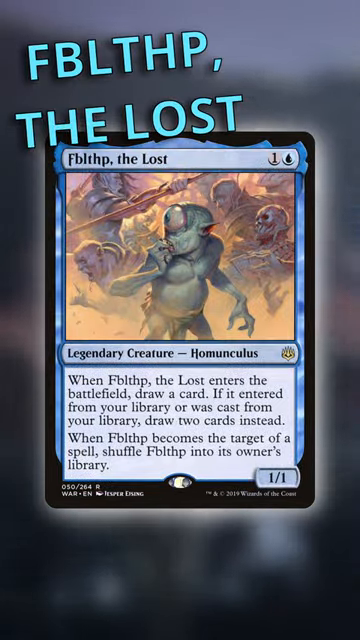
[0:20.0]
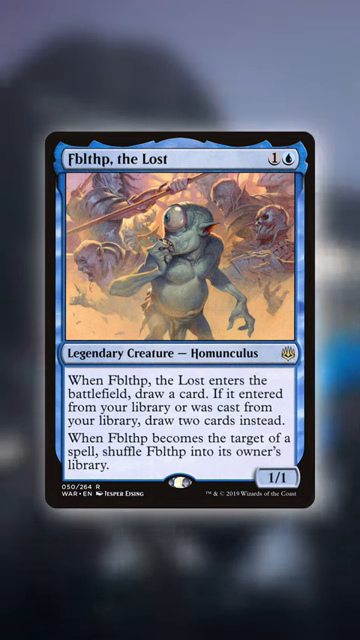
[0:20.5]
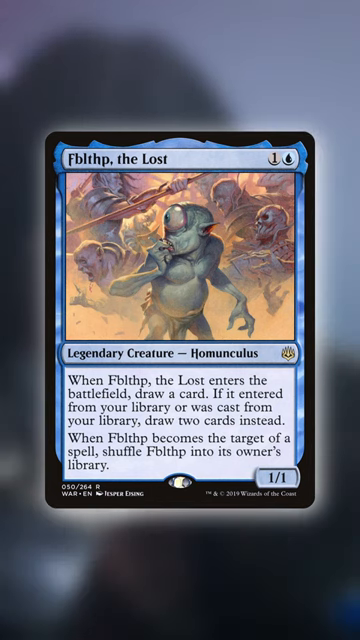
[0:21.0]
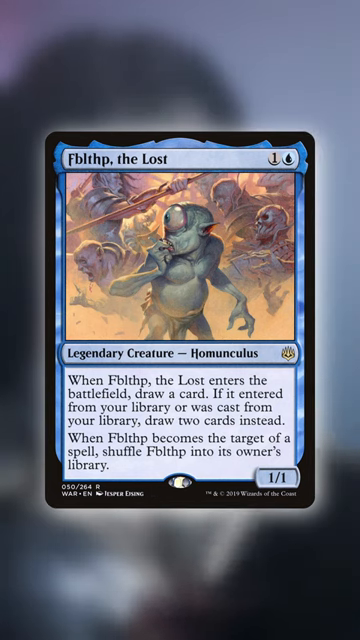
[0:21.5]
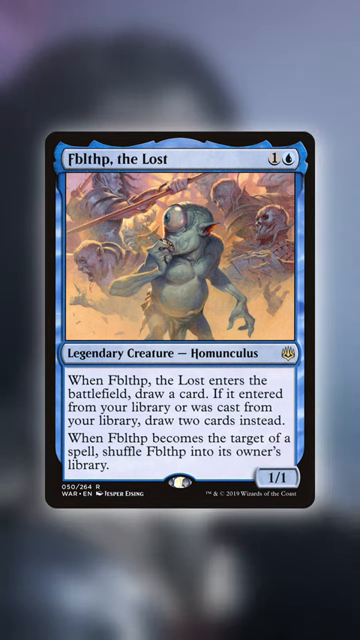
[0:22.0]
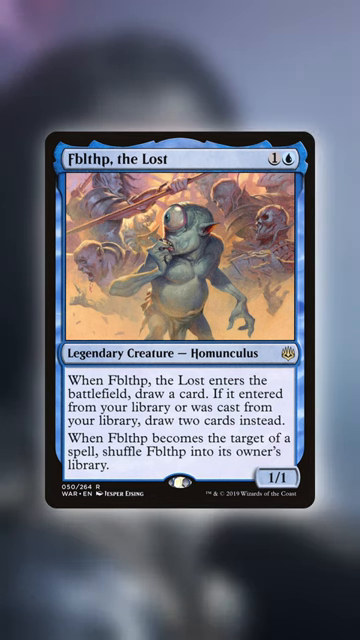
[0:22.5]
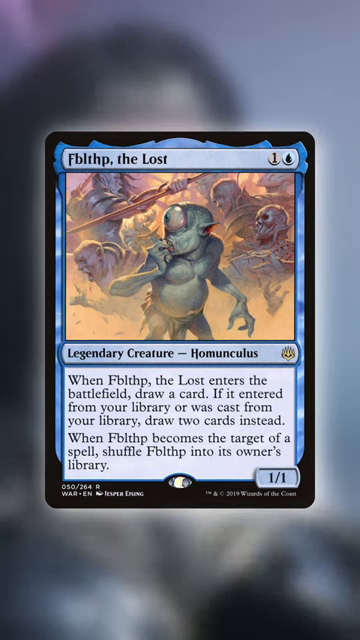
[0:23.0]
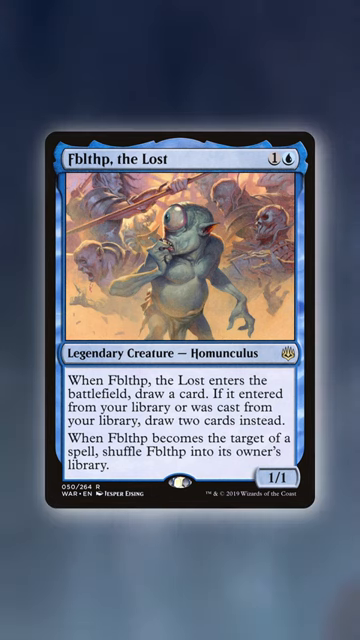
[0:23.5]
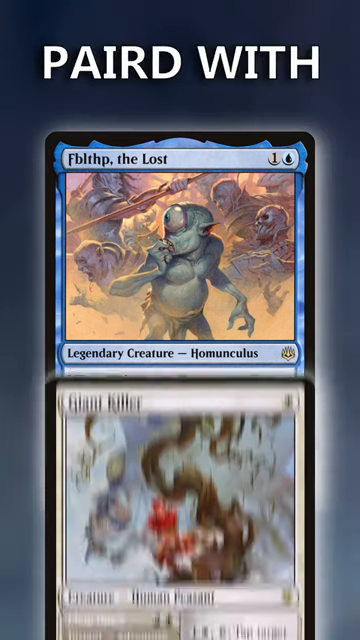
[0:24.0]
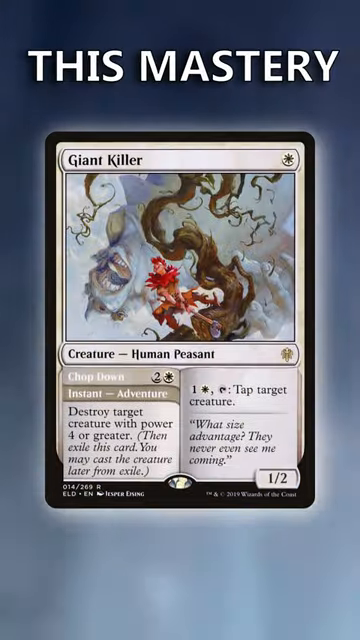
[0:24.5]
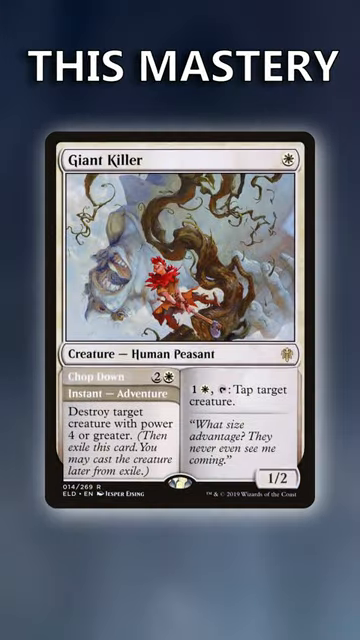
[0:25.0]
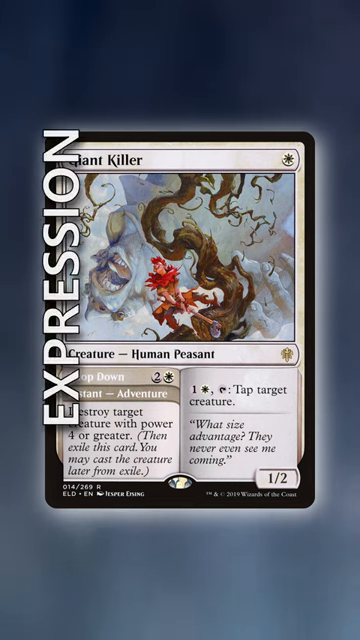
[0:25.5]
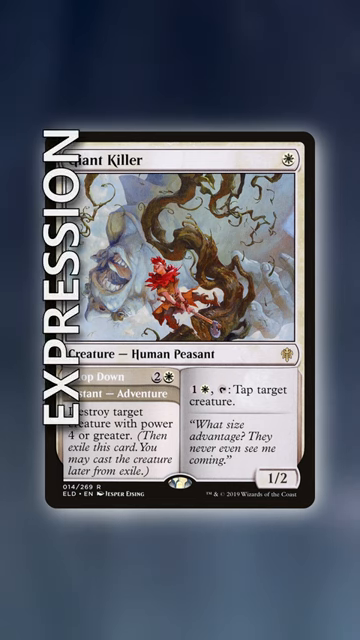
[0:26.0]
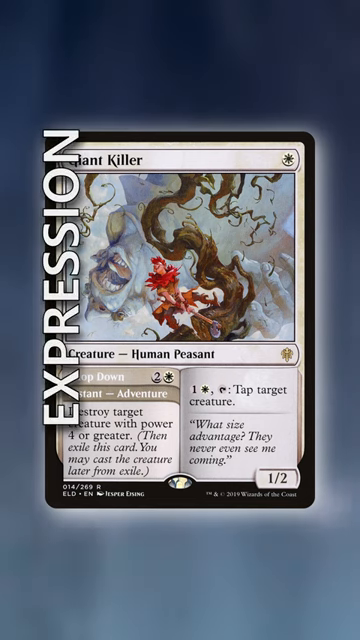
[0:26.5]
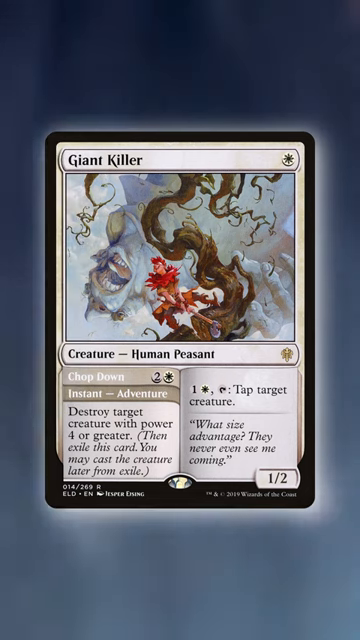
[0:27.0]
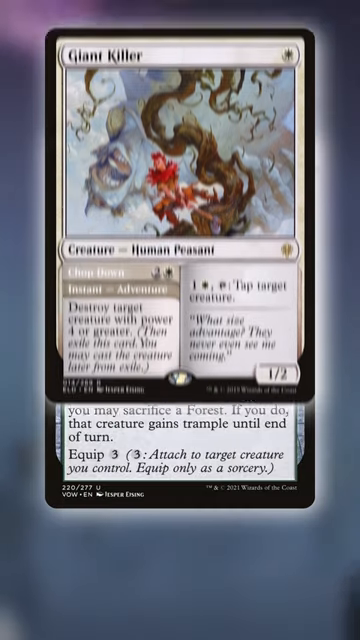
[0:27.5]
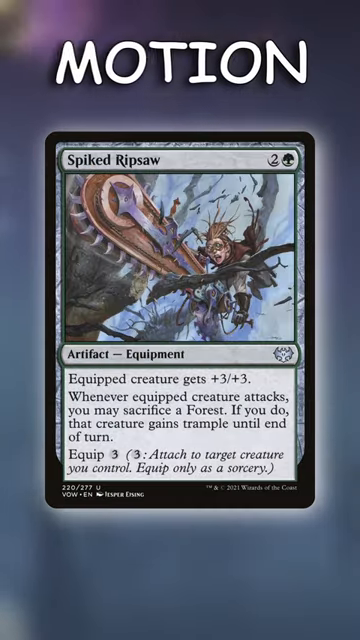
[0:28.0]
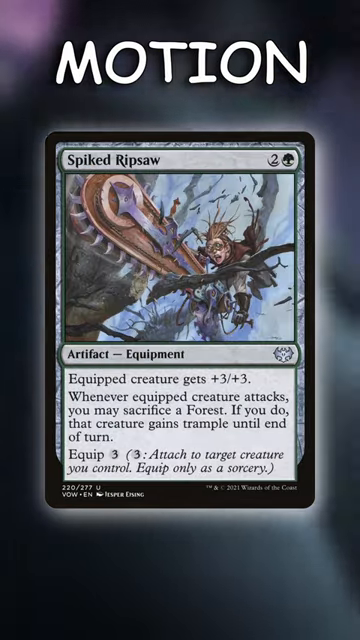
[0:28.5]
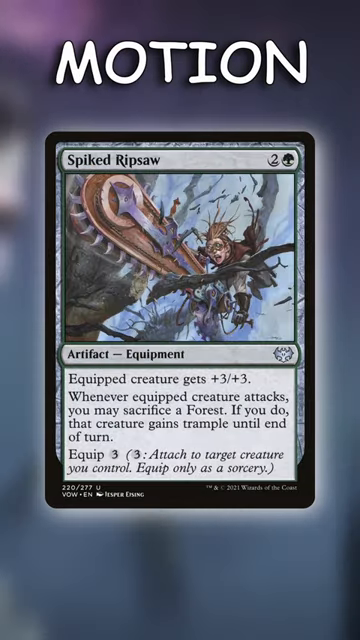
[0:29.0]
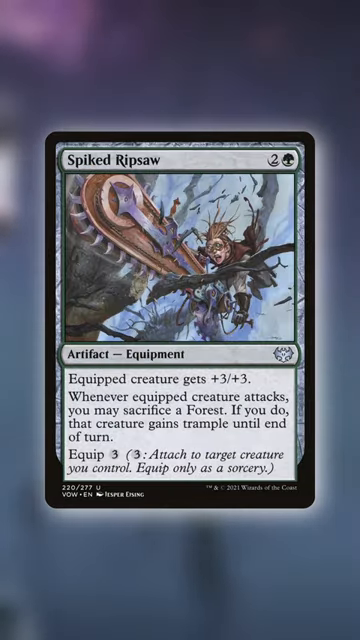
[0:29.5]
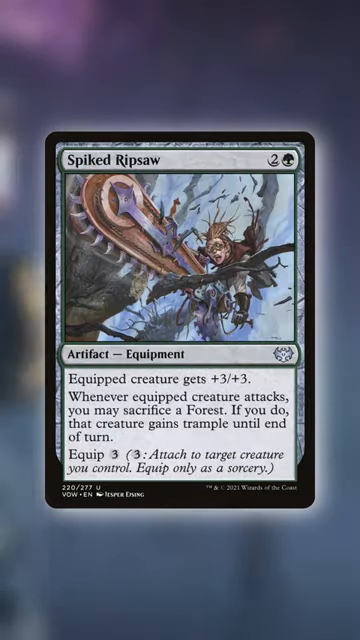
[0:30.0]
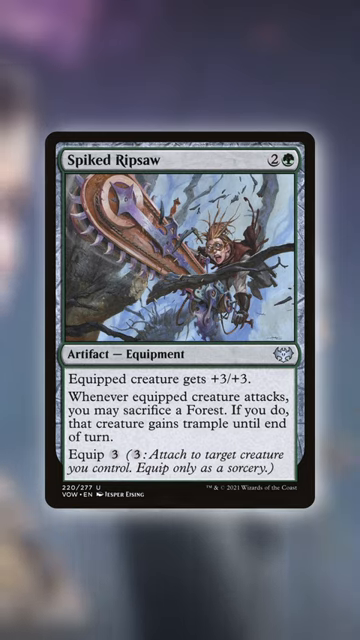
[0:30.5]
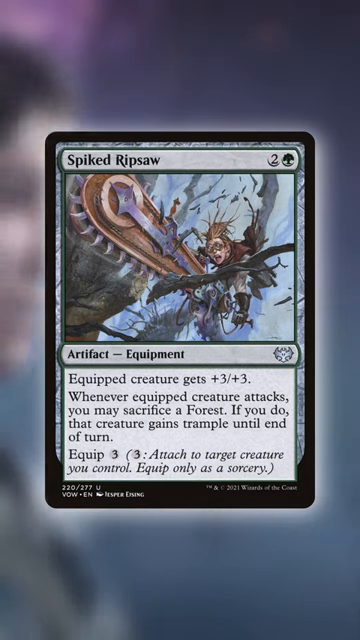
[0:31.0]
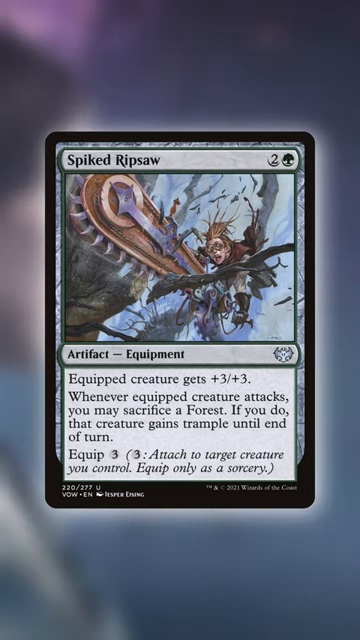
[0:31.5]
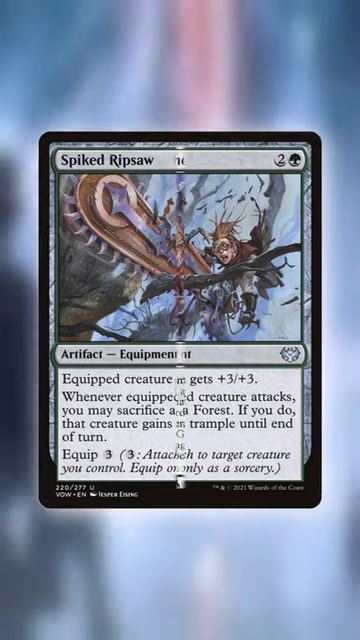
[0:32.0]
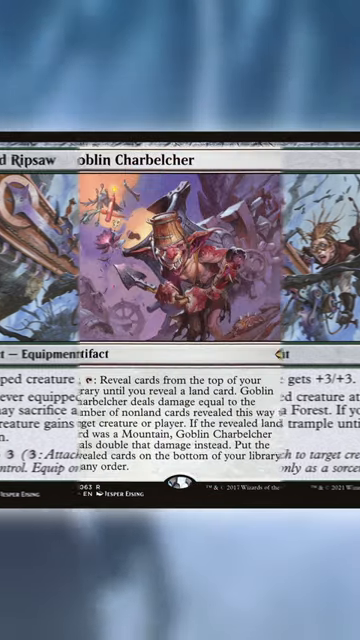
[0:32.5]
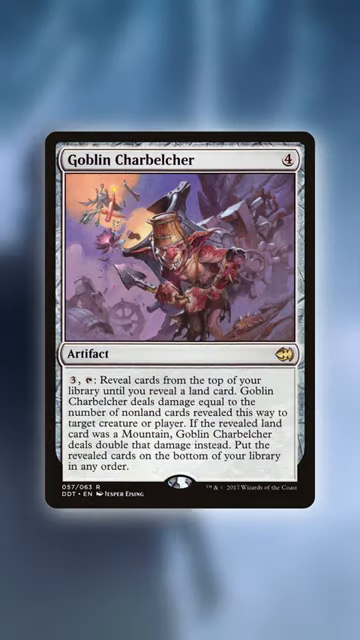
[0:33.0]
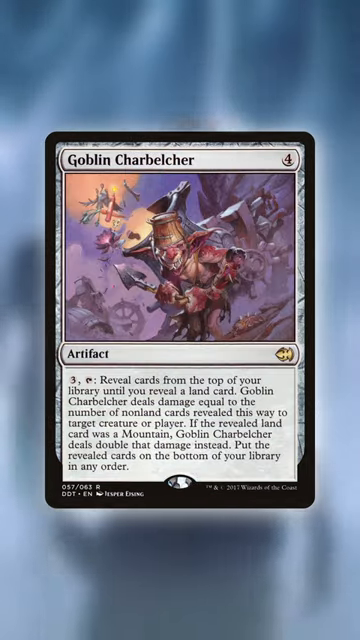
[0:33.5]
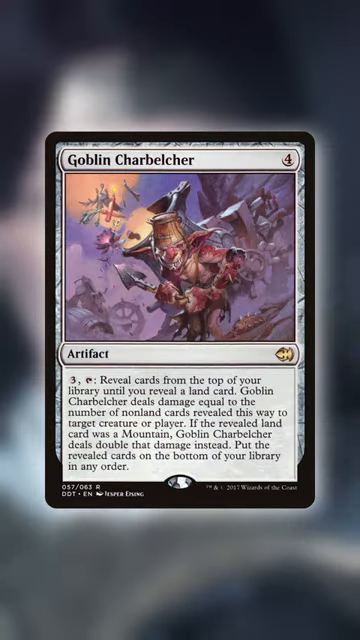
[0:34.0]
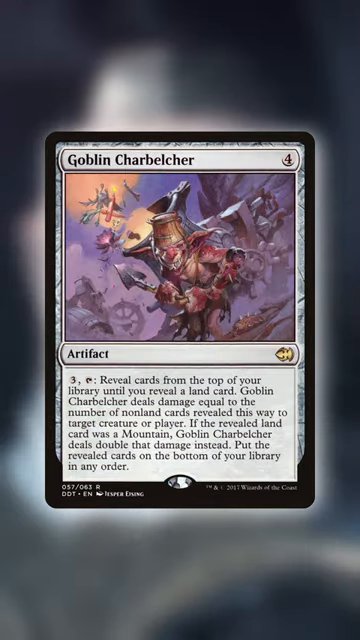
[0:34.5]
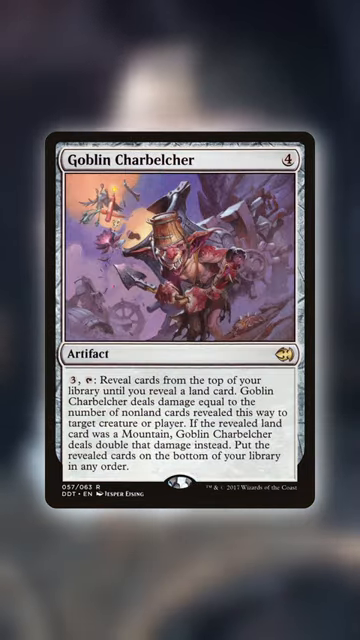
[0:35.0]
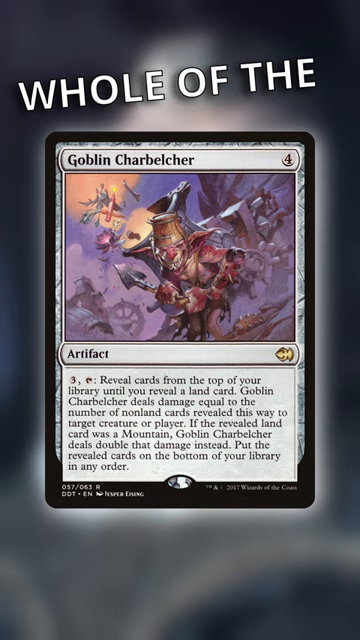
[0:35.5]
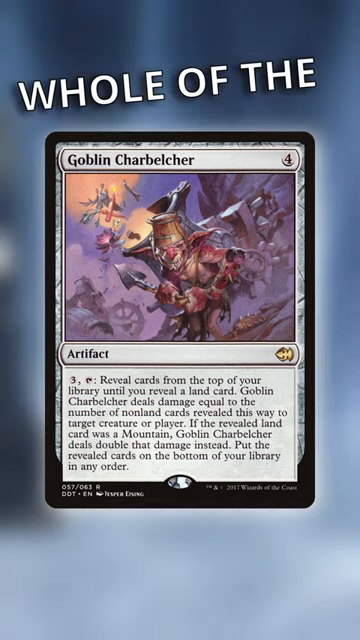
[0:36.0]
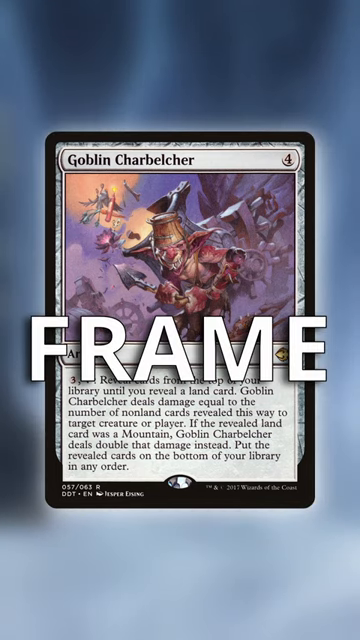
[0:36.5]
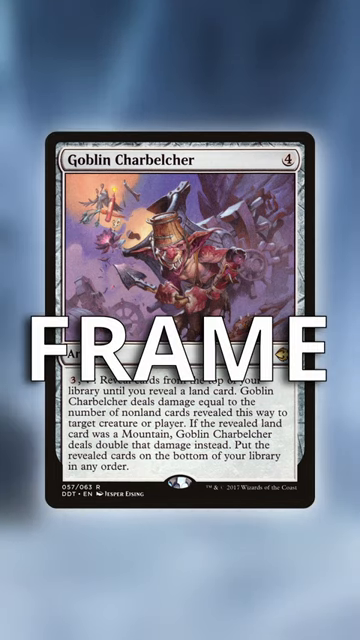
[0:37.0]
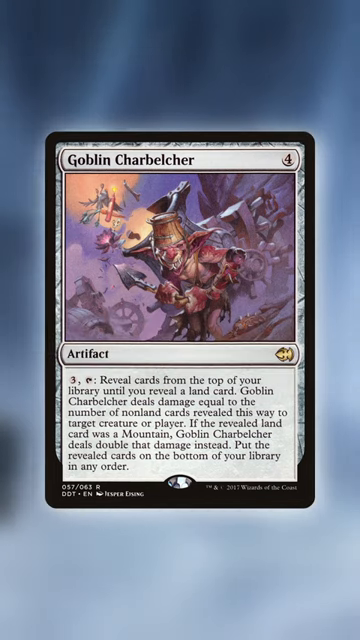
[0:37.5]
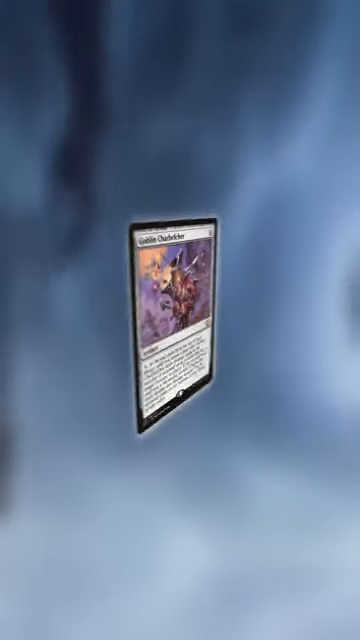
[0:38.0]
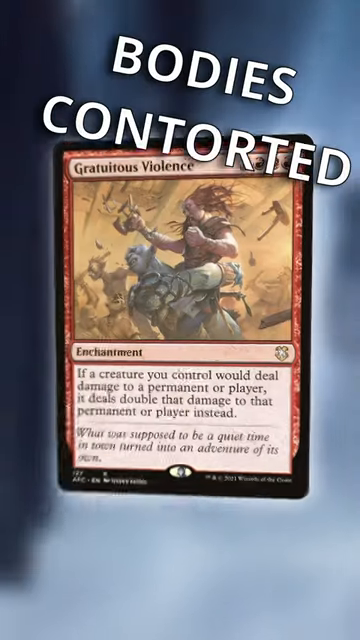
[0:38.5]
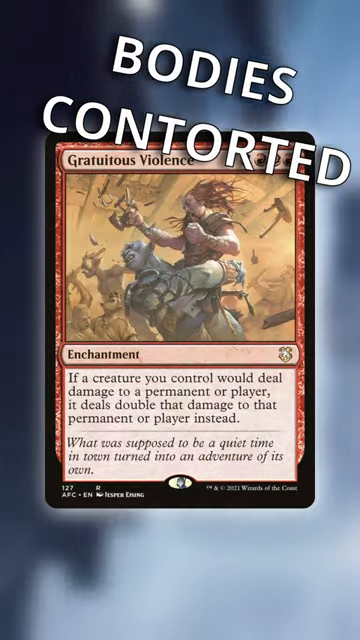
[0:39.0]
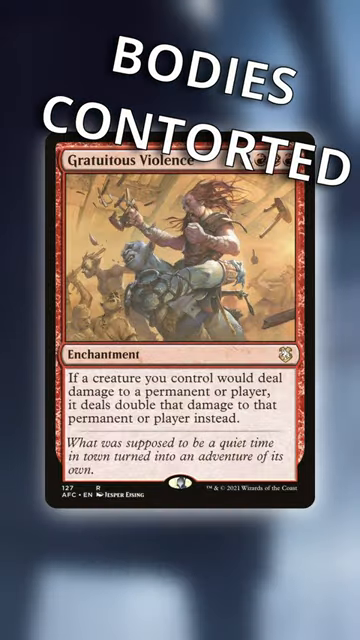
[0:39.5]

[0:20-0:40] The first character is introduced: an alien-like creature with one eye called the Loss, labeled a legendary creature, with a description of how it functions on the battlefield. Next comes Giant Killer, labeled a human peasant, with text about what it does and how it succeeds. Each card has an illustration of what the character represents. The next card is Spiked Ripsaw, labeled as an artifact equipment creature; its illustration shows a figure holding what appears to be a chainsaw machine, cutting into something, or maybe killing something. Then comes Goblin Carp Belcher, whose type is not clearly stated, with a description and an illustration of what it is.